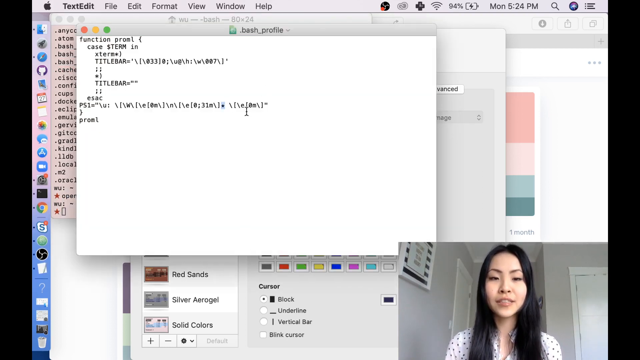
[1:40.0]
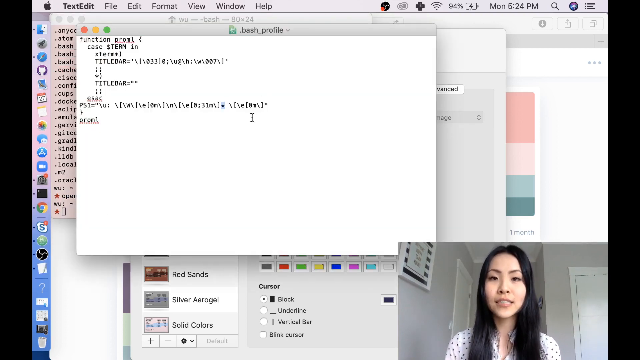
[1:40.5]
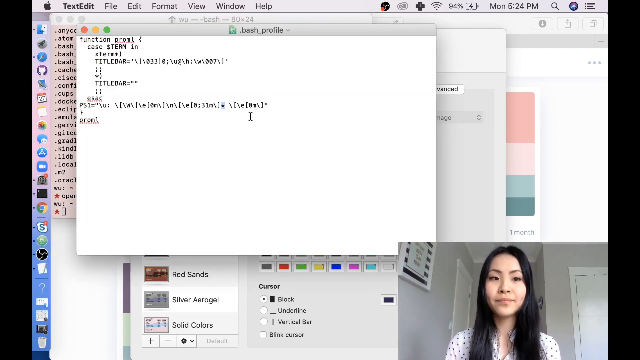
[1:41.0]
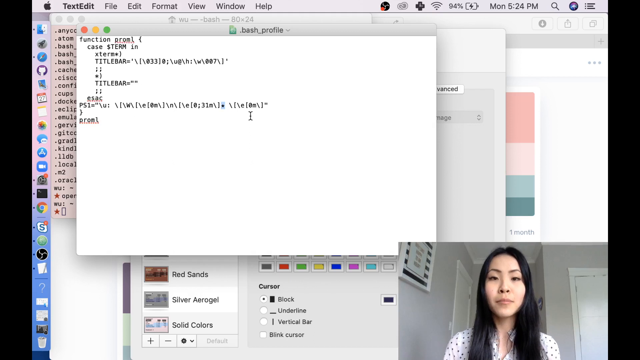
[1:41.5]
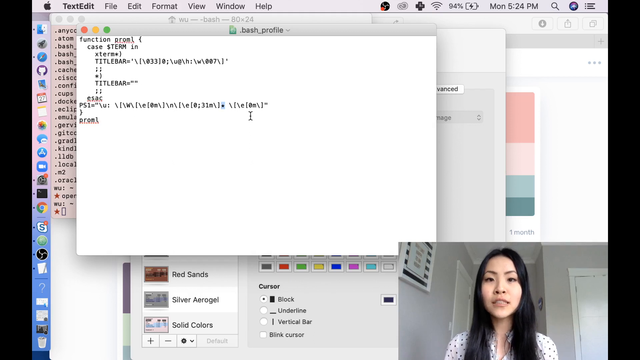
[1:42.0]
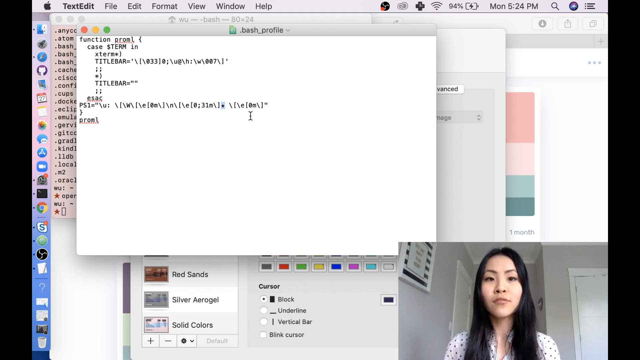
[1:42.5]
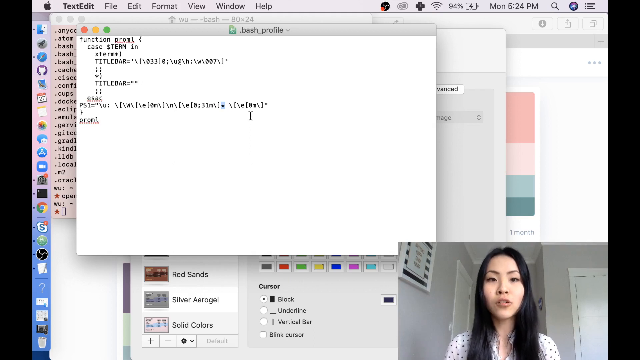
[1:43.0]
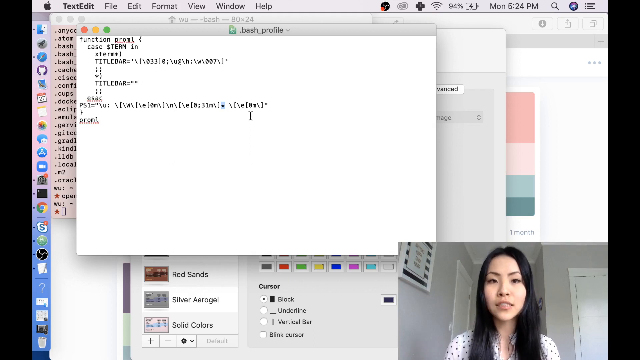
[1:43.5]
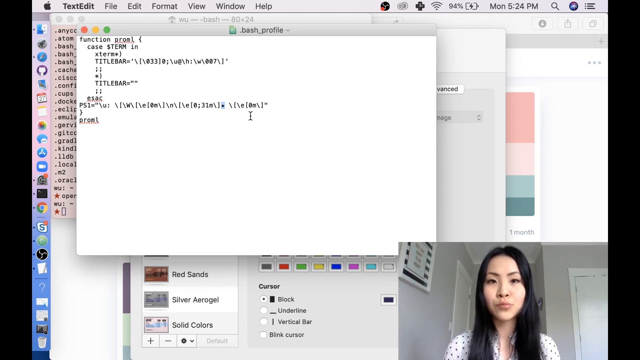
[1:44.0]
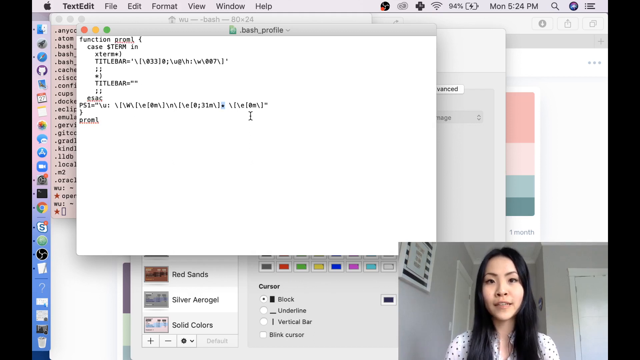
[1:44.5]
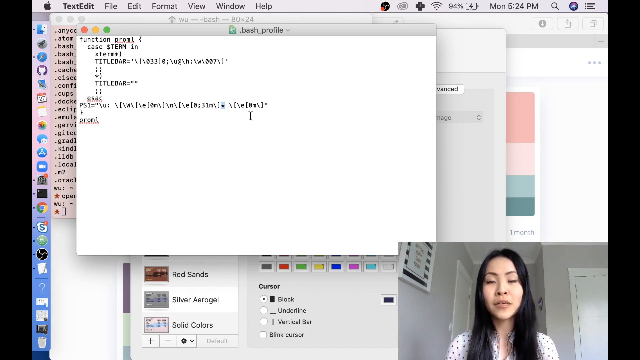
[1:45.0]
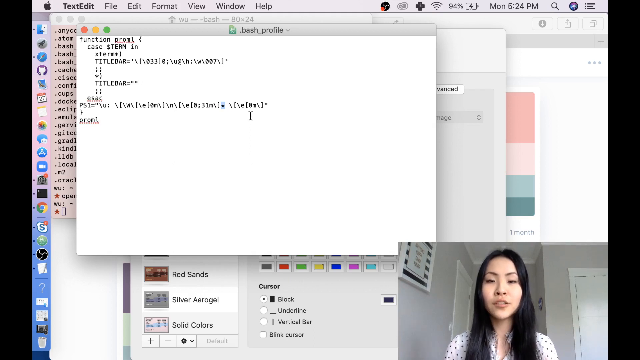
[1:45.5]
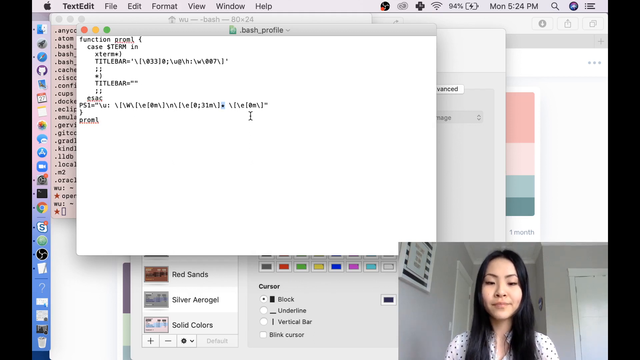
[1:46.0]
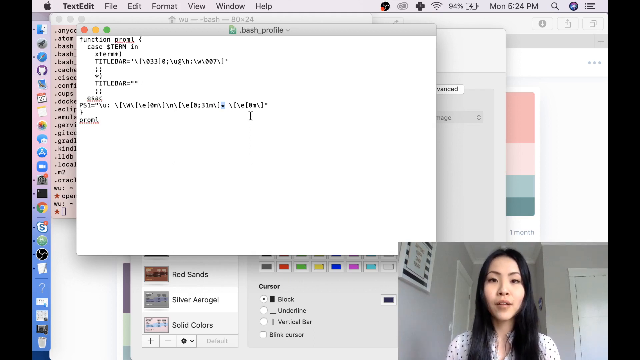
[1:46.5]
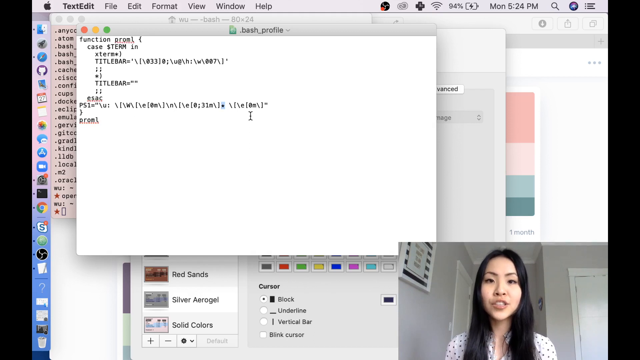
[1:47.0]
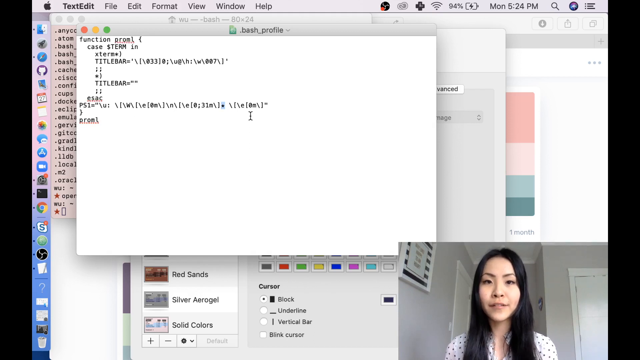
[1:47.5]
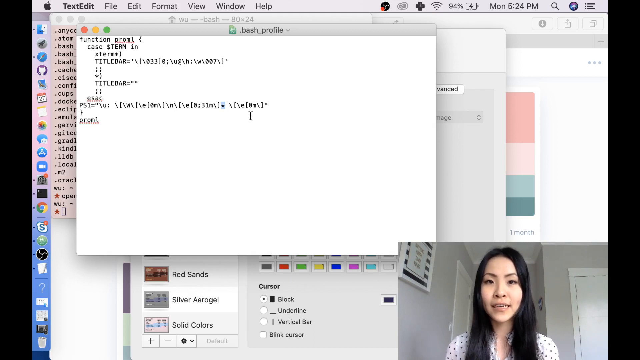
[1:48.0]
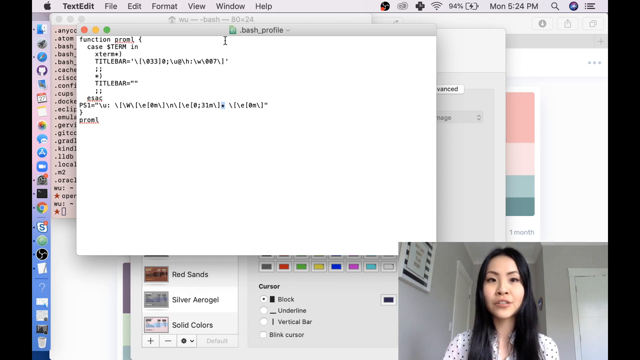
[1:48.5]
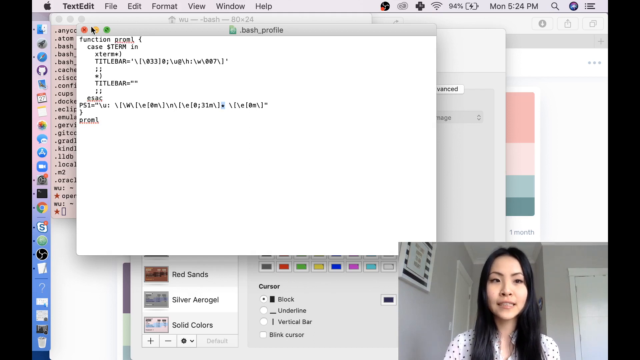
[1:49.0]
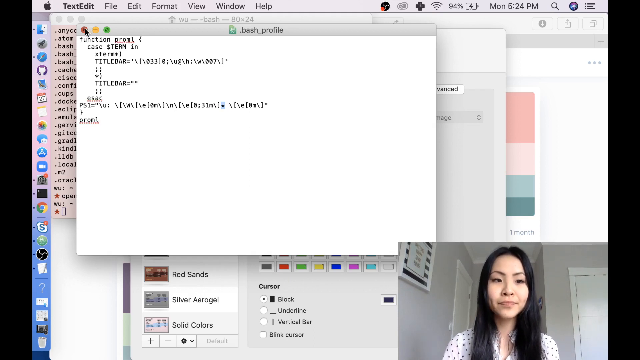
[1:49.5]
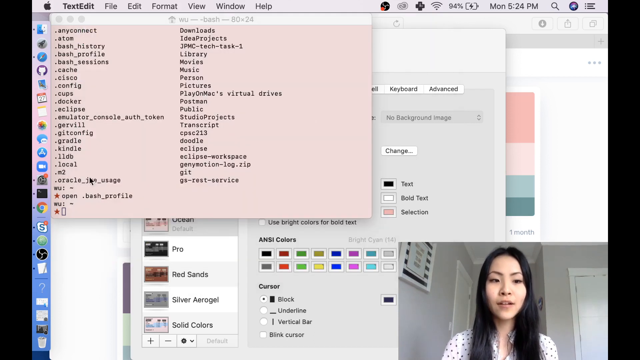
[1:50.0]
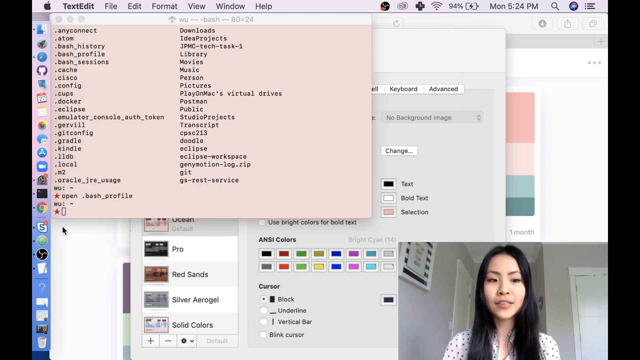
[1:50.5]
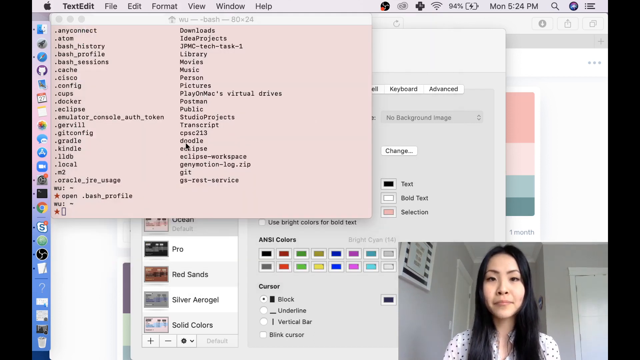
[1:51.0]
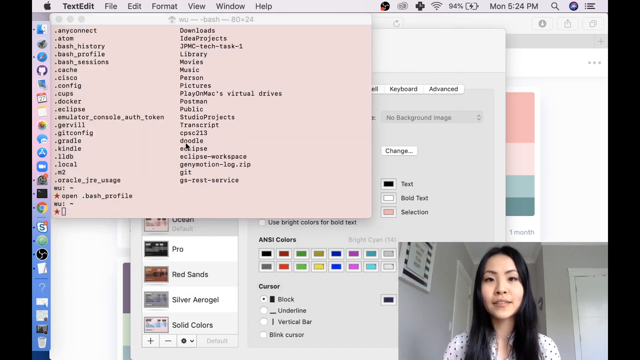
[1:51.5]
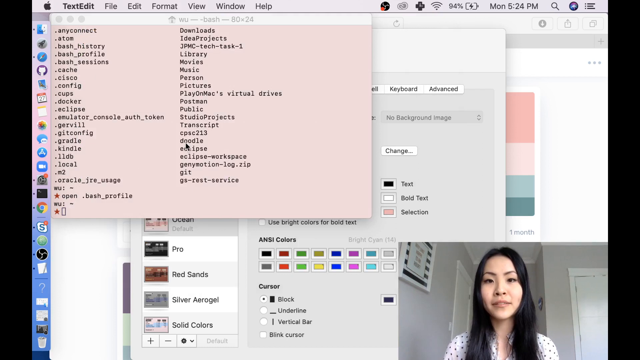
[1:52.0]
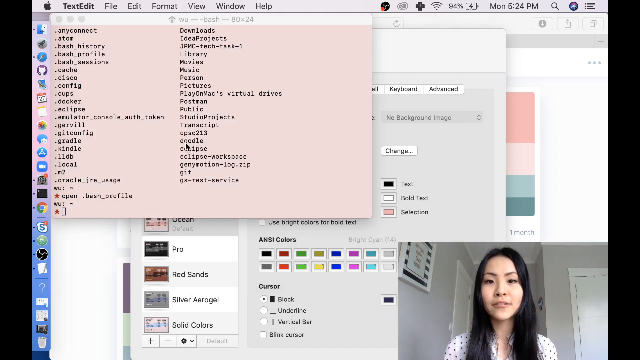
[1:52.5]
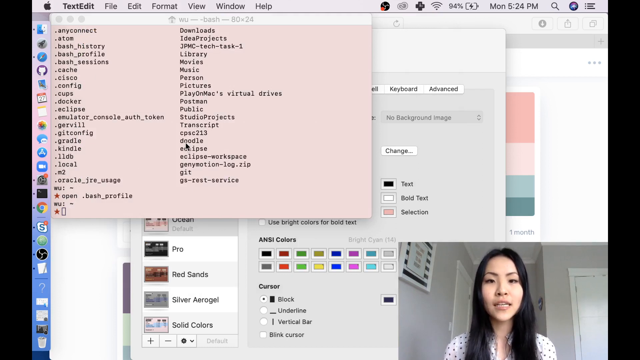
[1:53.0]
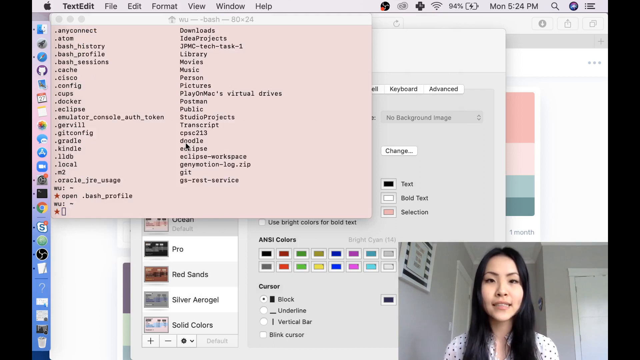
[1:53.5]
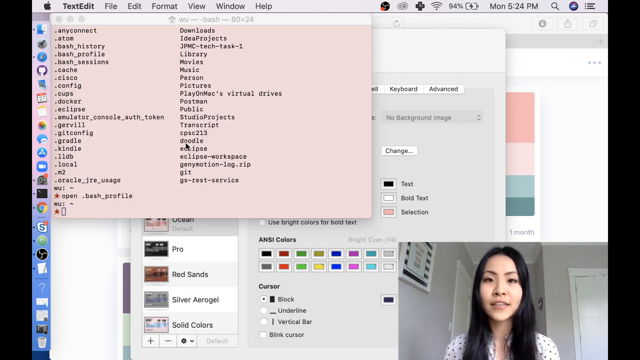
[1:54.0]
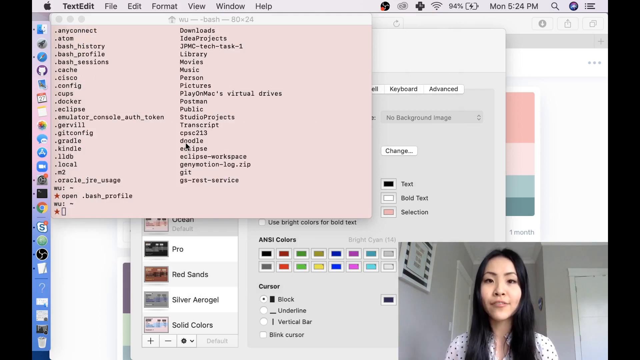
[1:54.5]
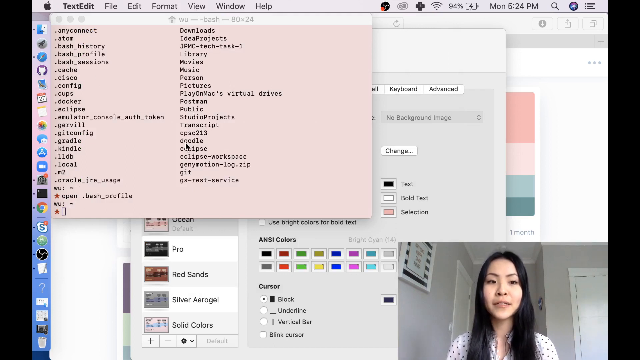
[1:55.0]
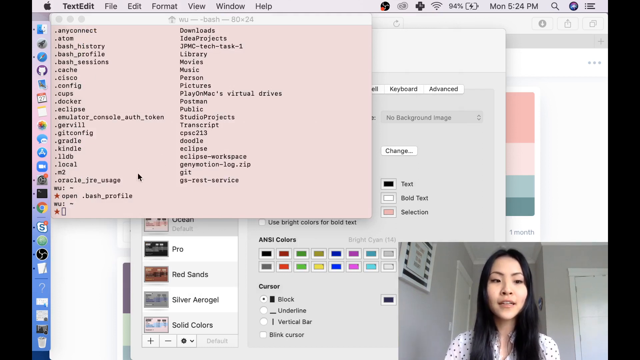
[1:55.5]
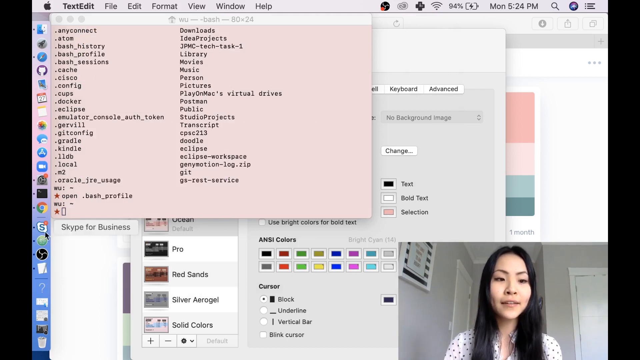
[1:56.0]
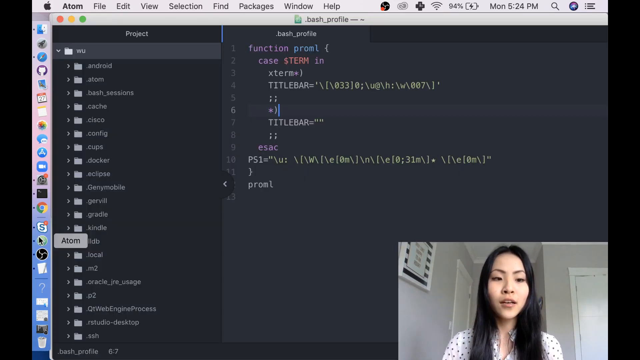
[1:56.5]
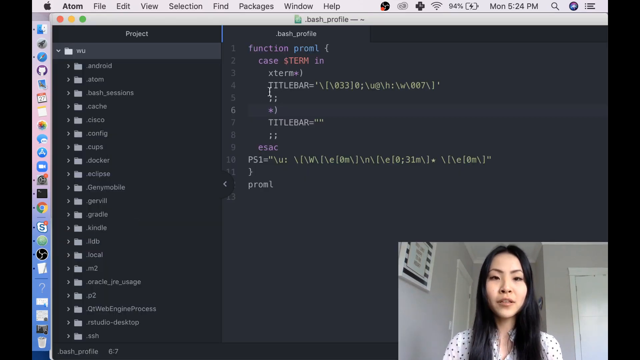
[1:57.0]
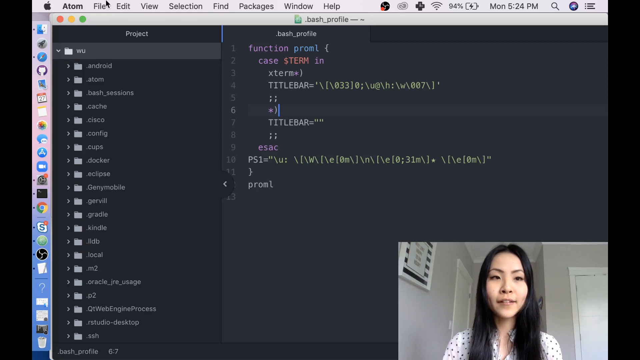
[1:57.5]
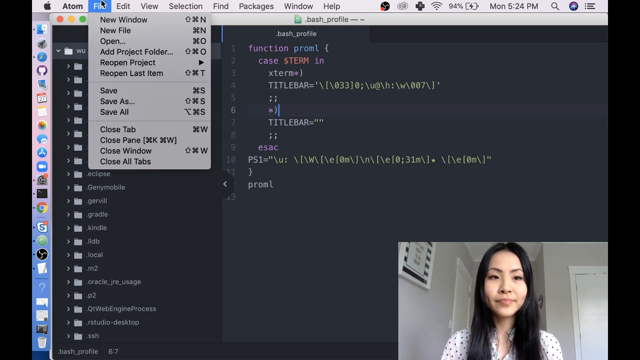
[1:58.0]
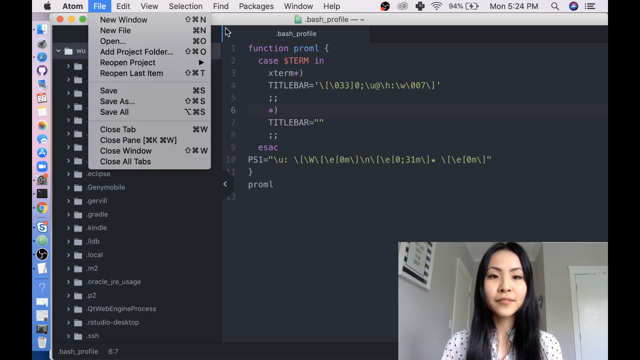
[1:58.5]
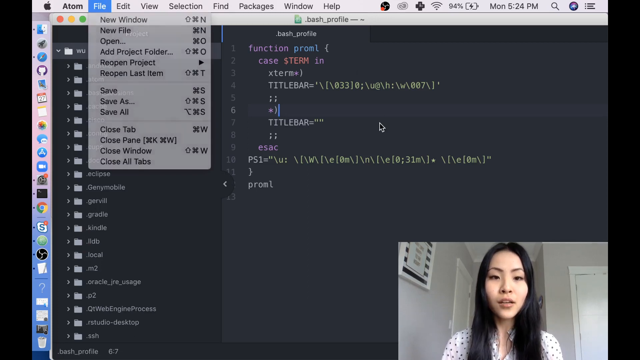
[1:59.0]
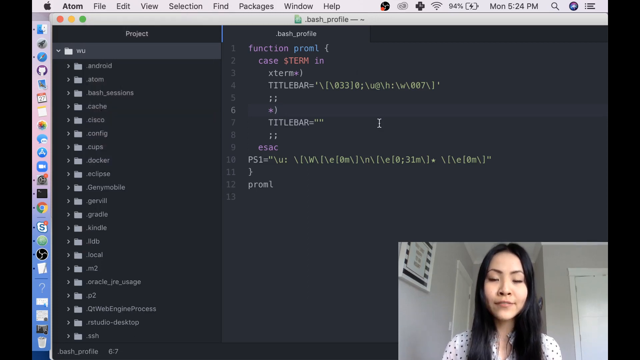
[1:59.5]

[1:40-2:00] Black code appears on a white background as the woman gives the tutorial.